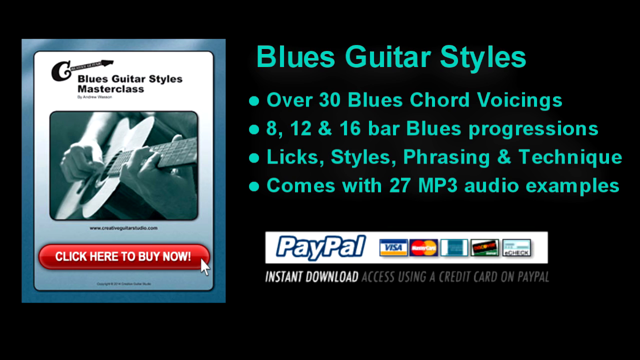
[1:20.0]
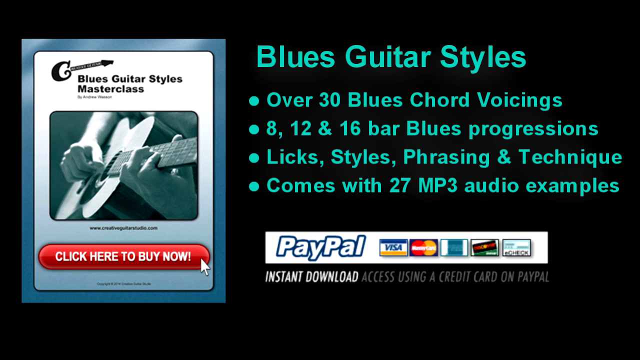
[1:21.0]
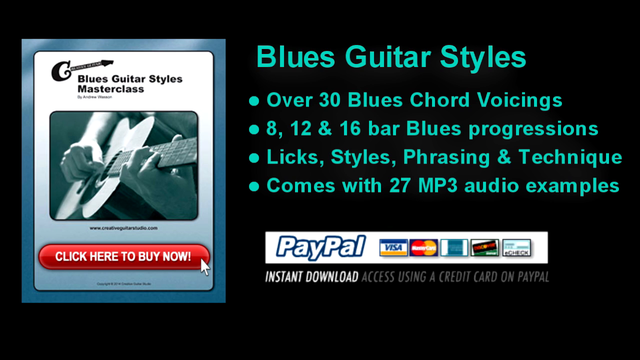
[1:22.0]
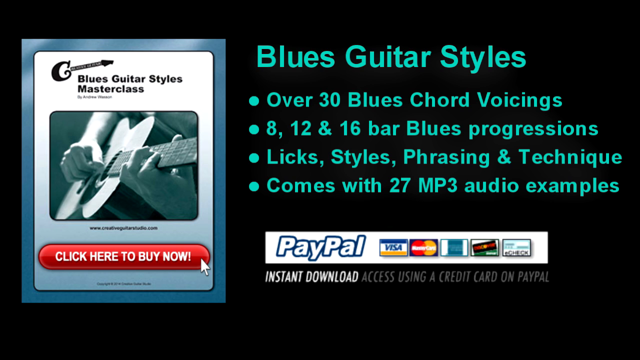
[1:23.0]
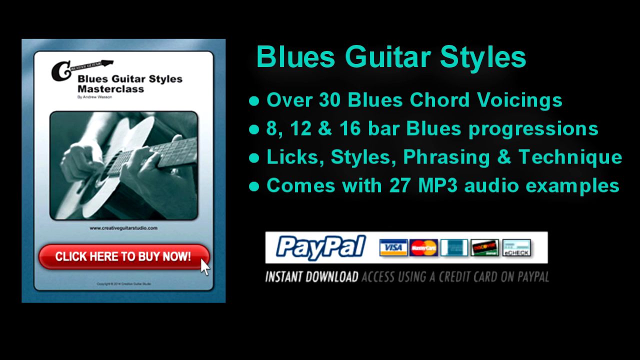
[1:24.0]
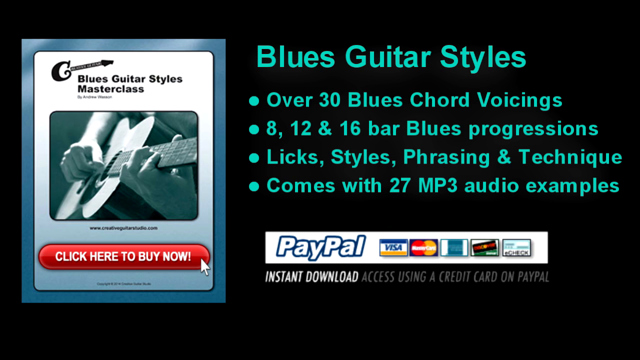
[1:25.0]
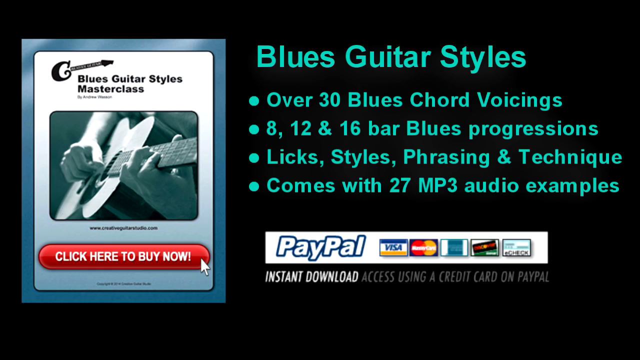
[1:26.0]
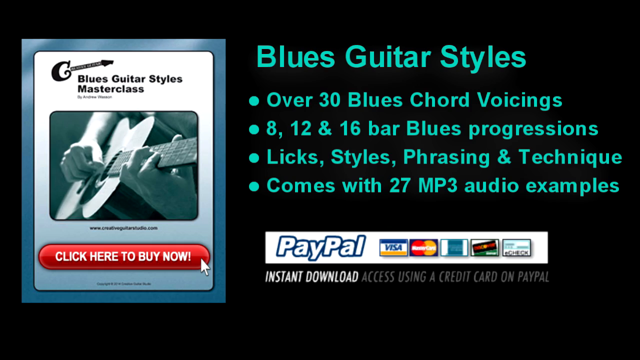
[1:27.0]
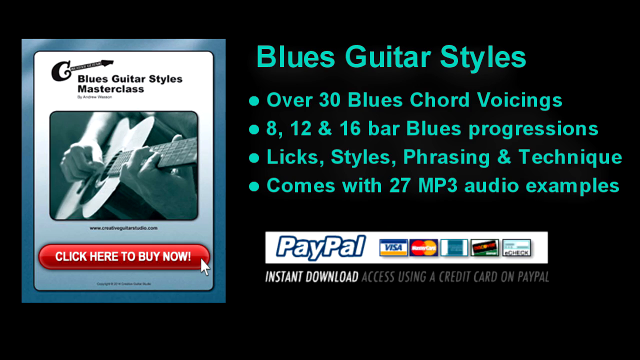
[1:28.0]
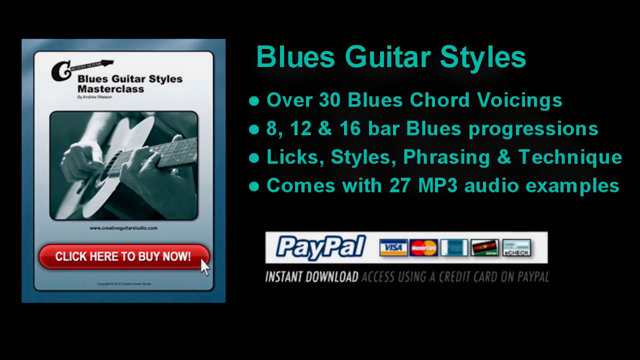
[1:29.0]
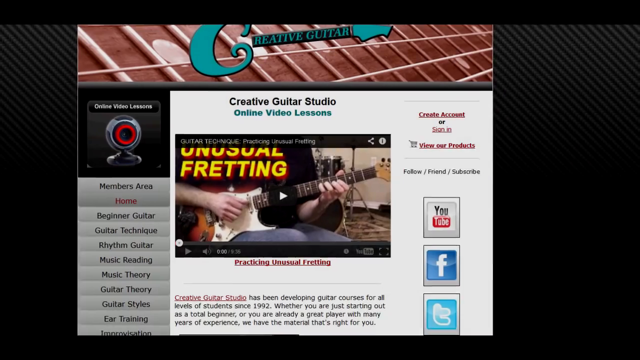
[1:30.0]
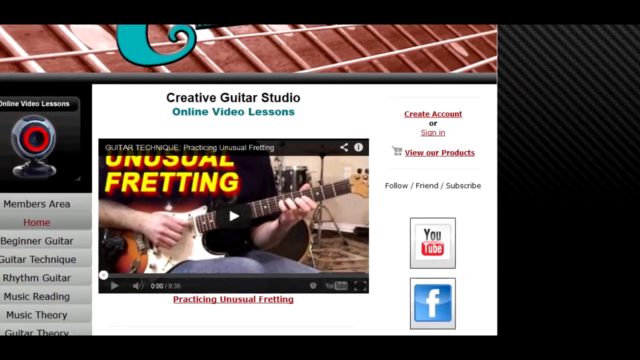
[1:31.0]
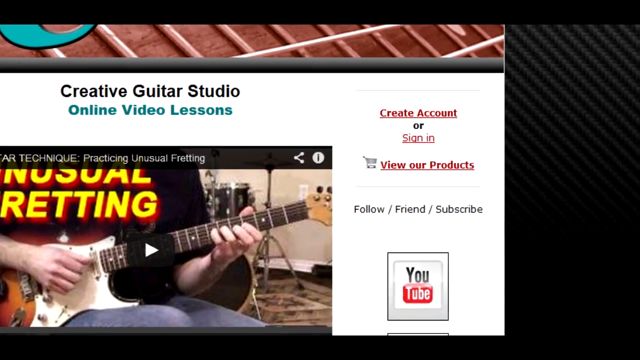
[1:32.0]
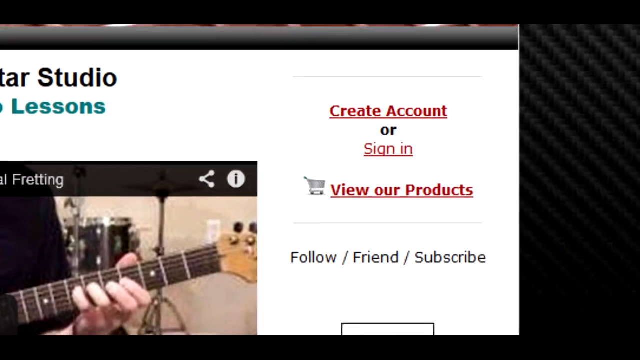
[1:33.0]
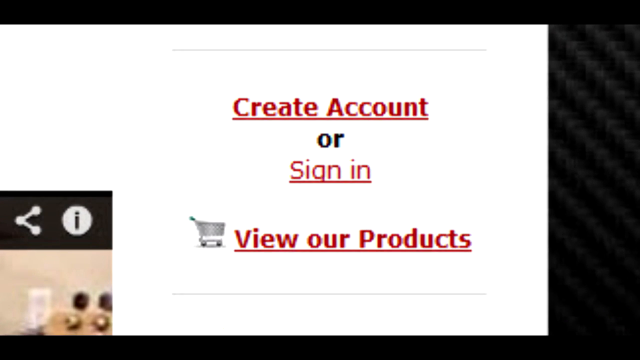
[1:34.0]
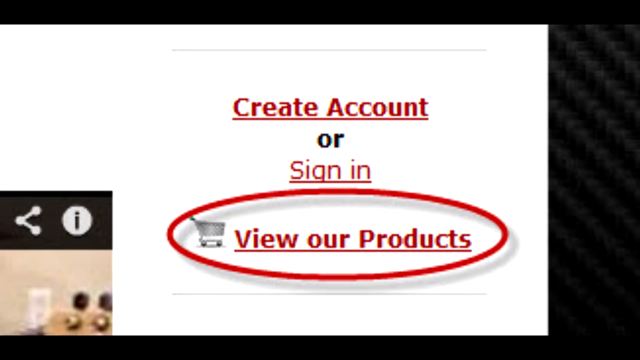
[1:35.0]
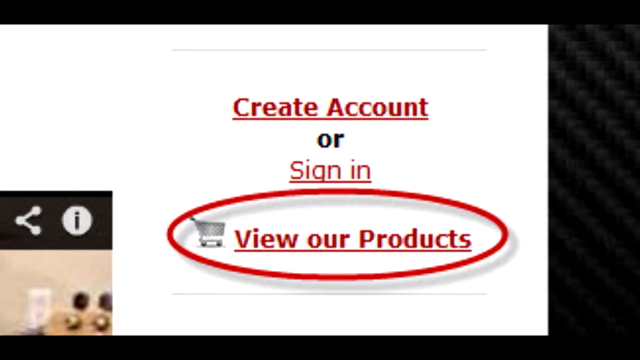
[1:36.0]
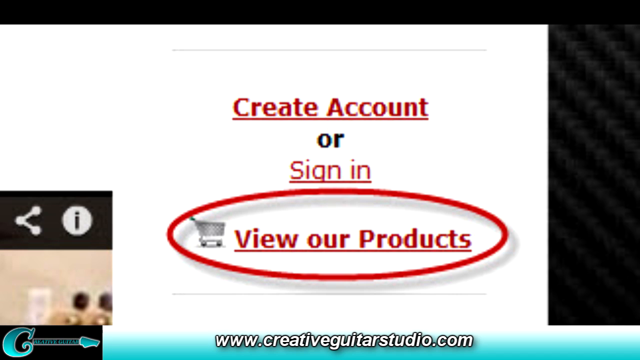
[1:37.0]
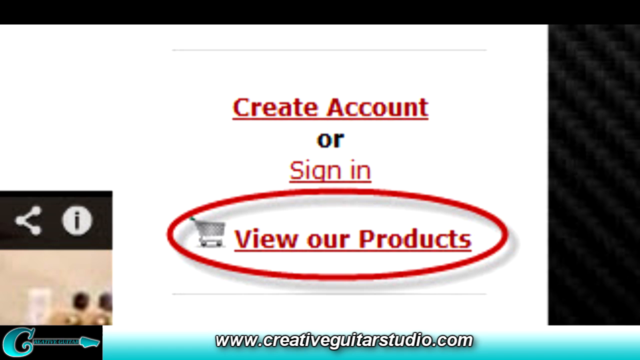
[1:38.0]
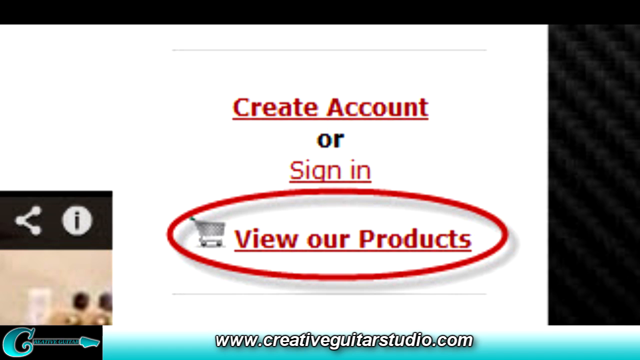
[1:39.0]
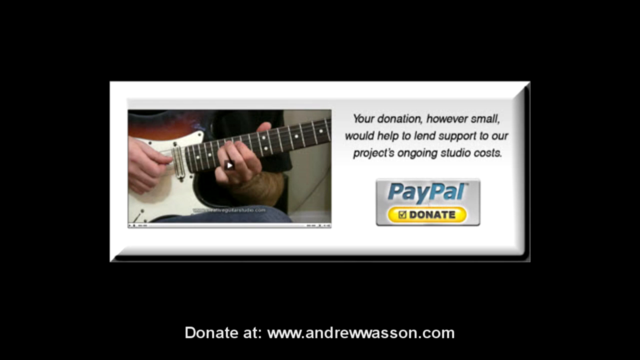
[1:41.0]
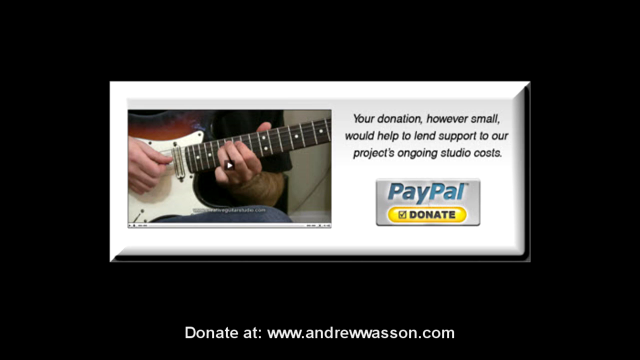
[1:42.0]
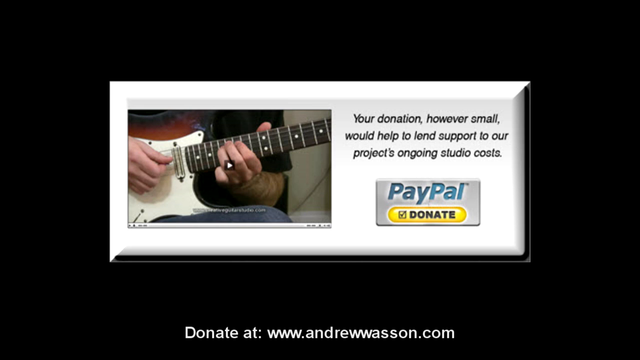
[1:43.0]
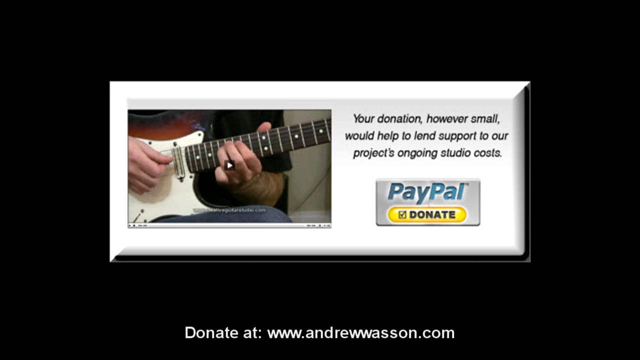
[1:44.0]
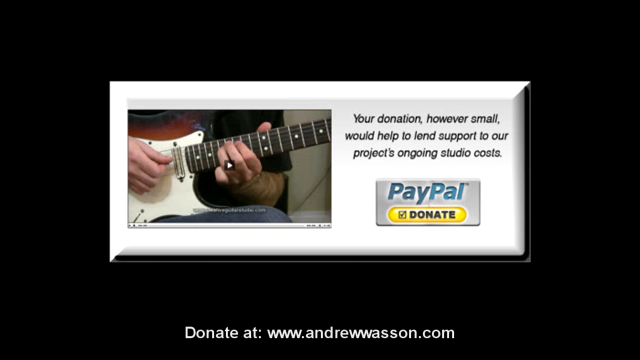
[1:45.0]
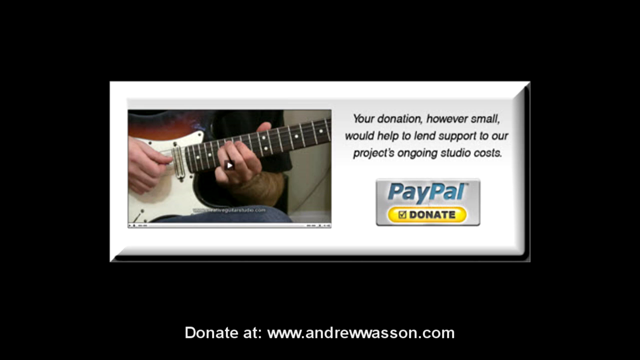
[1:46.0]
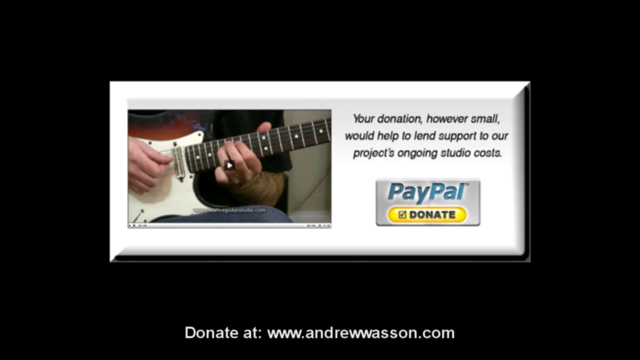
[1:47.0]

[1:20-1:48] The ad page stays on screen. On the left side is a photo of someone holding what looks to be an older guitar, with only their arms and the guitar visible. It is an ad for "Blues Guitar Styles Masterclass" with a "click here and buy now" link. Four bullet points read "over 30 blues chord voicings," "8, 12, and 16 bar blues progressions," "Licks, Styles, Phrasings, and Techniques," and "comes with 27 mp3 audio examples." Below is a list of payment options, PayPal, Visa, Mastercard, Discover and two others too hard to make out, and underneath it says "instant download access using a credit card on Paypal." The video then cuts to the website for the lessons, with options to create an account, sign in or view the products. Next is a still photo of a person in a black shirt holding an electric guitar, with the text "your donation, however small, would help lend support to our project's ongoing studio costs" and "Paypal Donates."